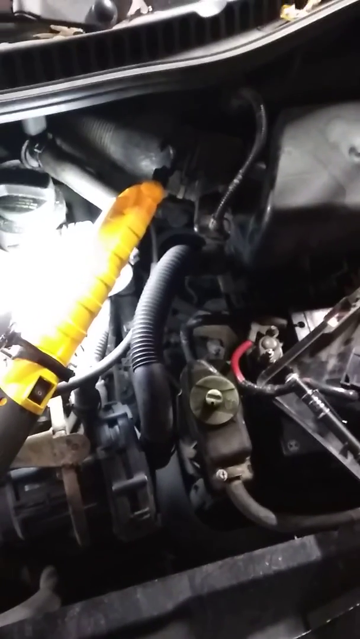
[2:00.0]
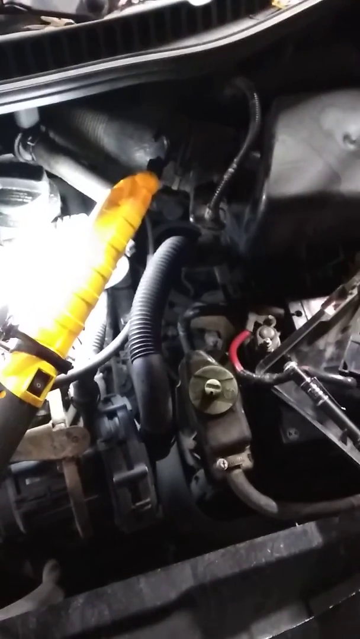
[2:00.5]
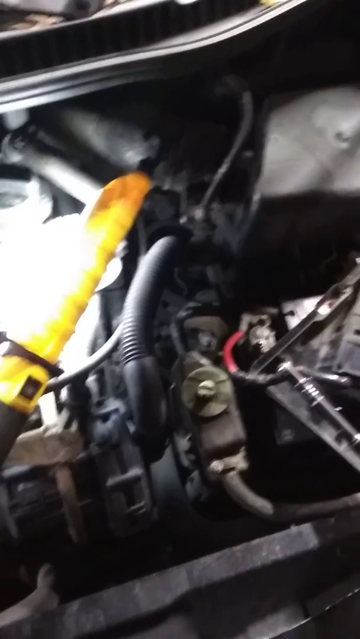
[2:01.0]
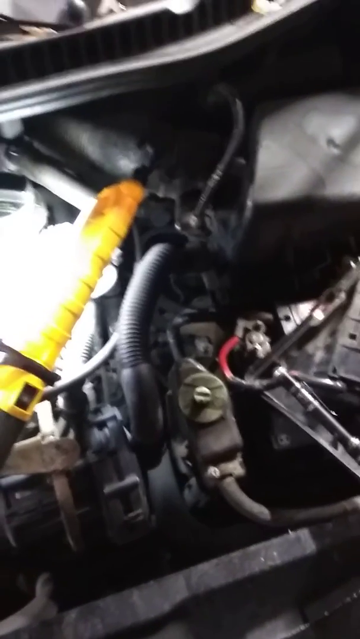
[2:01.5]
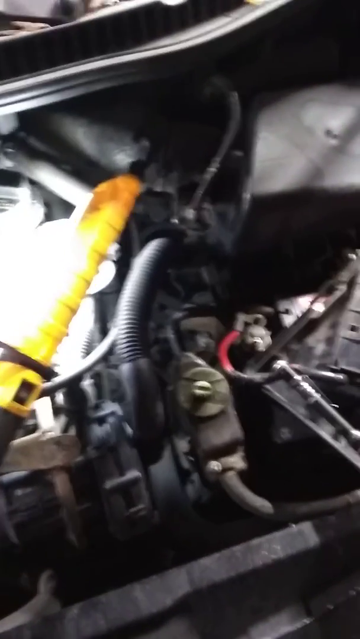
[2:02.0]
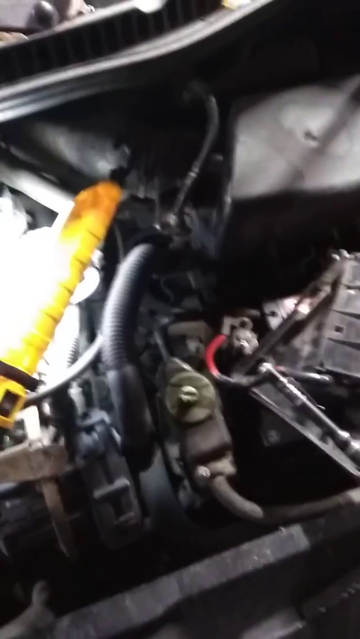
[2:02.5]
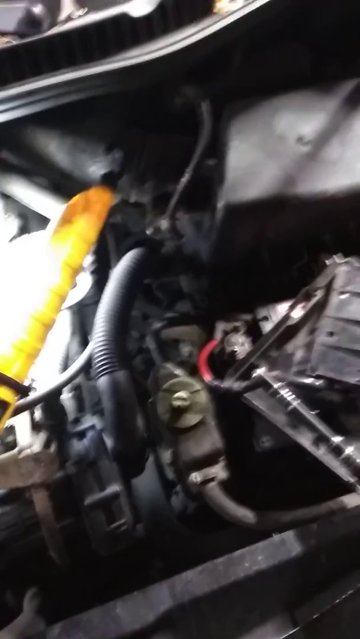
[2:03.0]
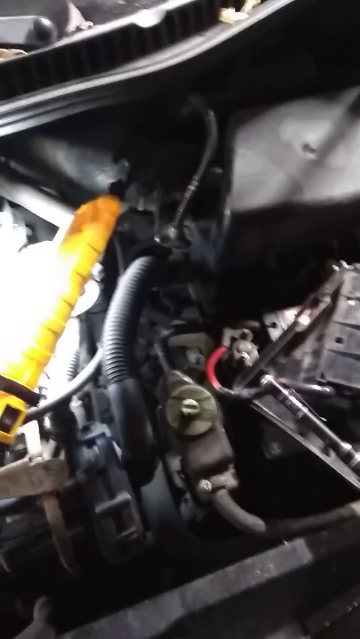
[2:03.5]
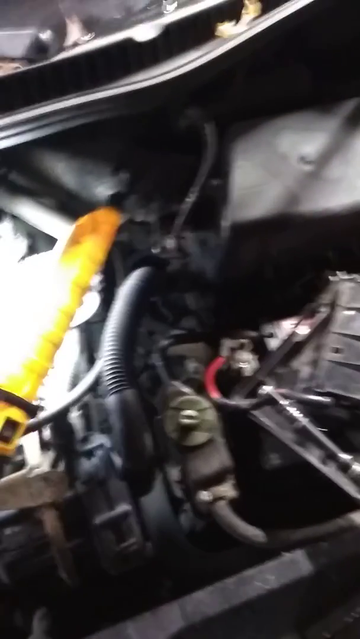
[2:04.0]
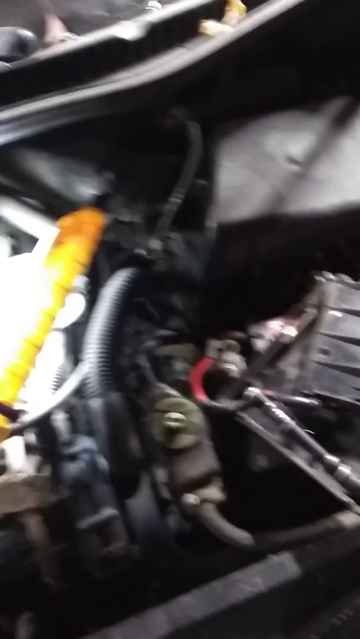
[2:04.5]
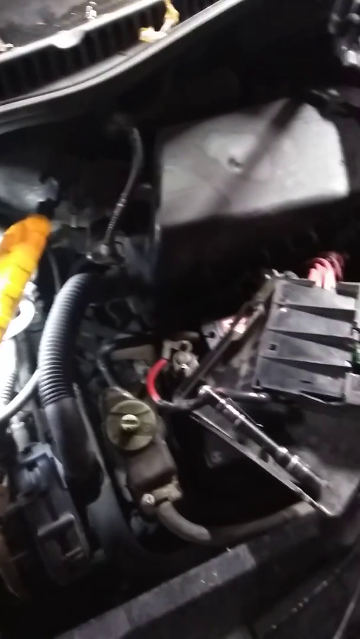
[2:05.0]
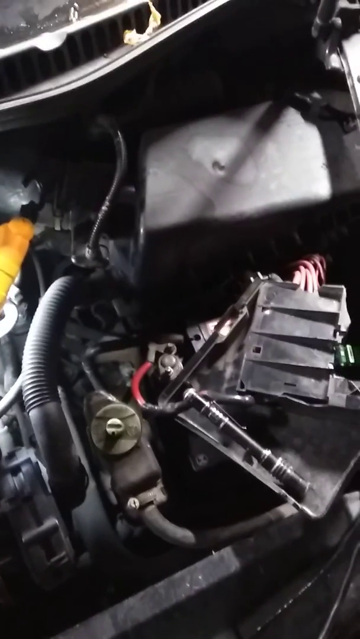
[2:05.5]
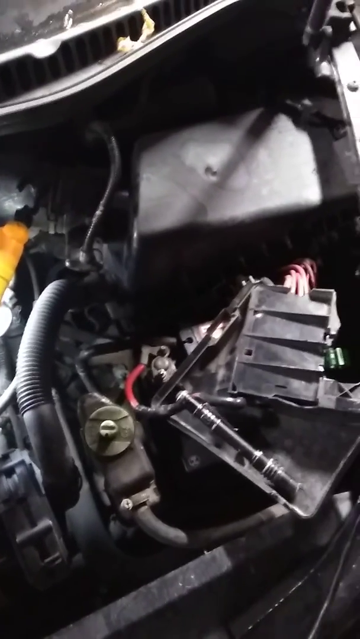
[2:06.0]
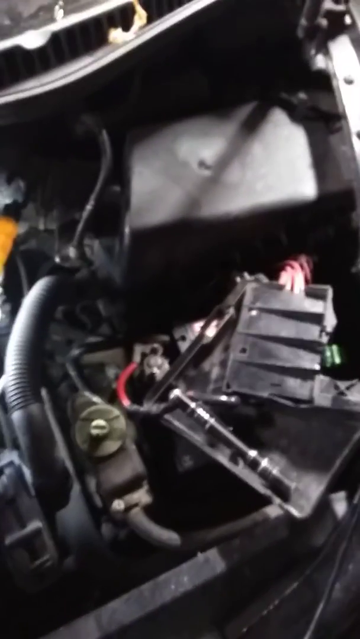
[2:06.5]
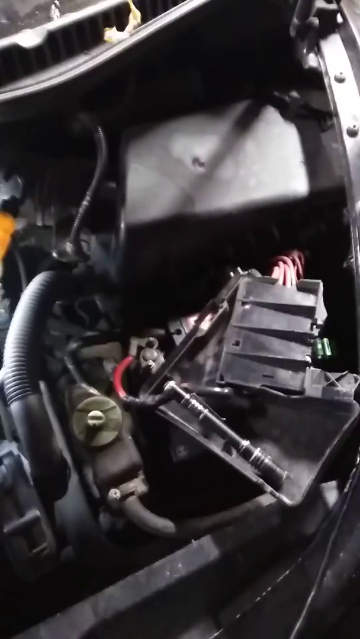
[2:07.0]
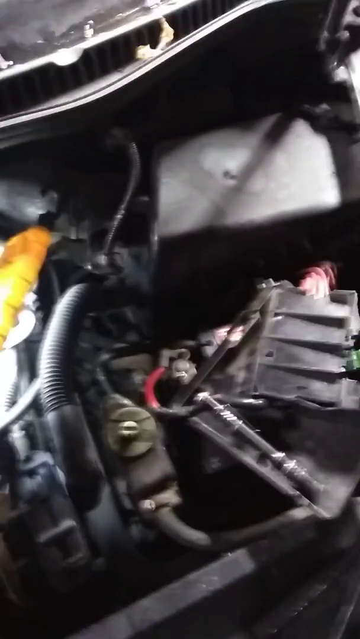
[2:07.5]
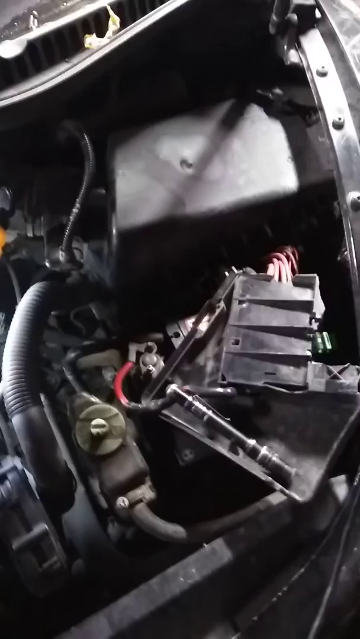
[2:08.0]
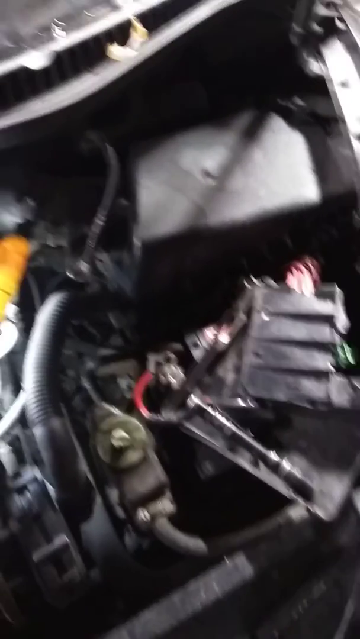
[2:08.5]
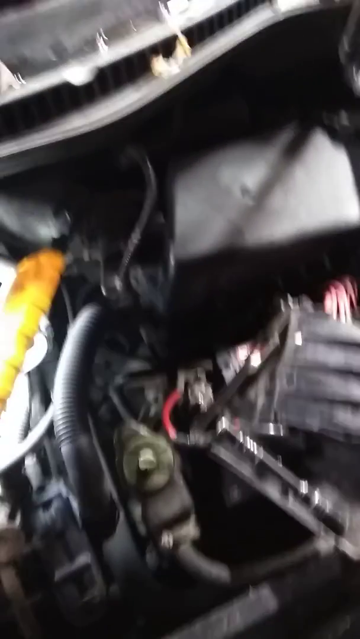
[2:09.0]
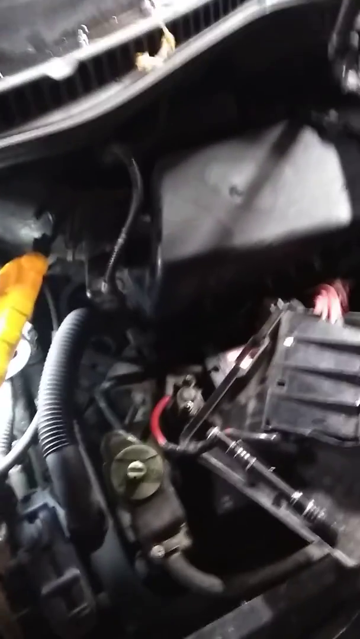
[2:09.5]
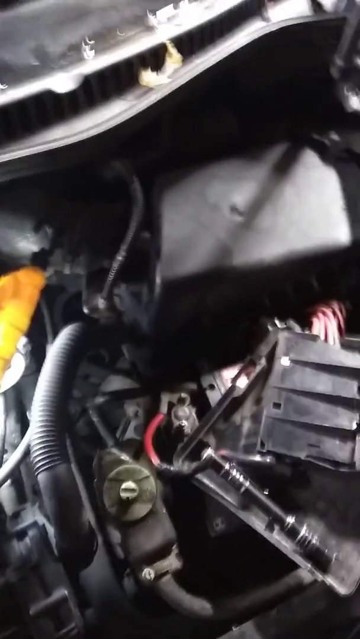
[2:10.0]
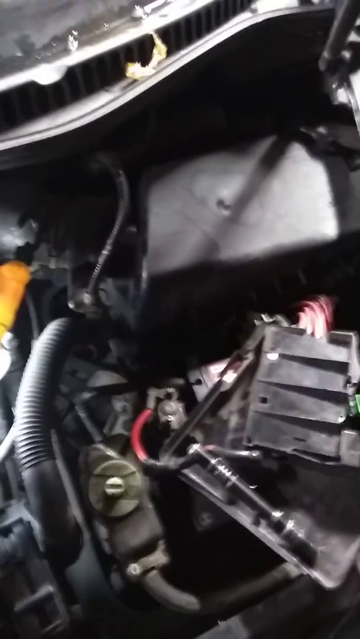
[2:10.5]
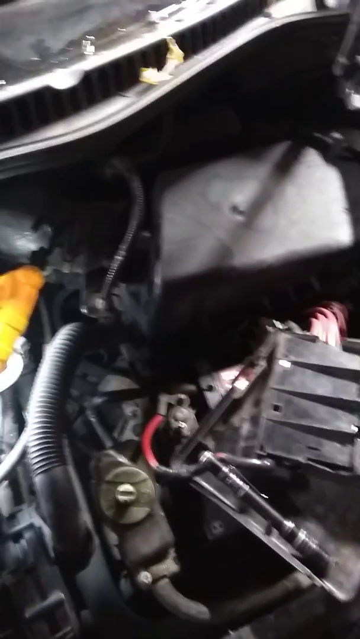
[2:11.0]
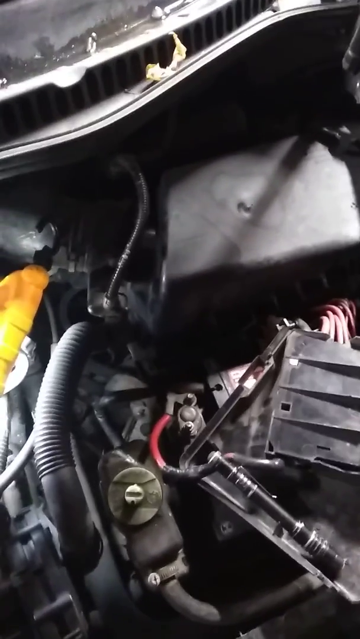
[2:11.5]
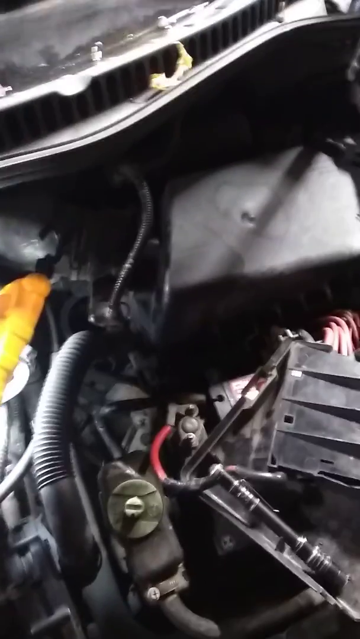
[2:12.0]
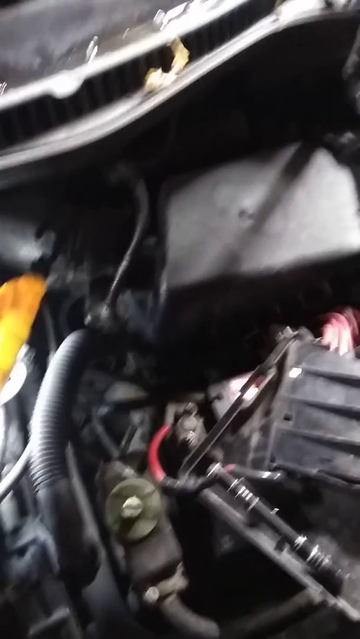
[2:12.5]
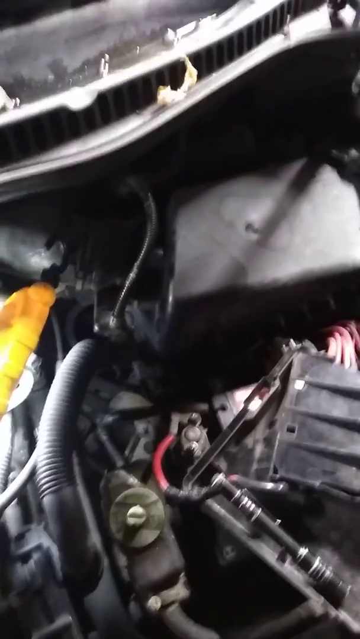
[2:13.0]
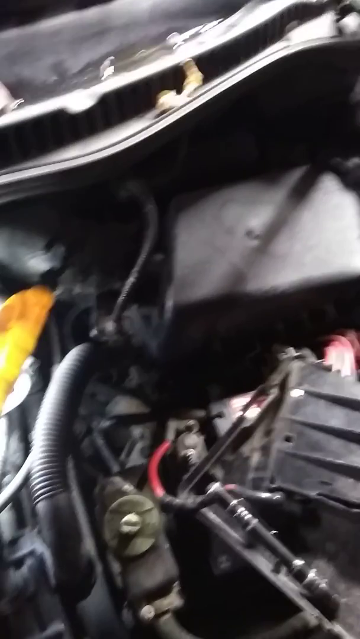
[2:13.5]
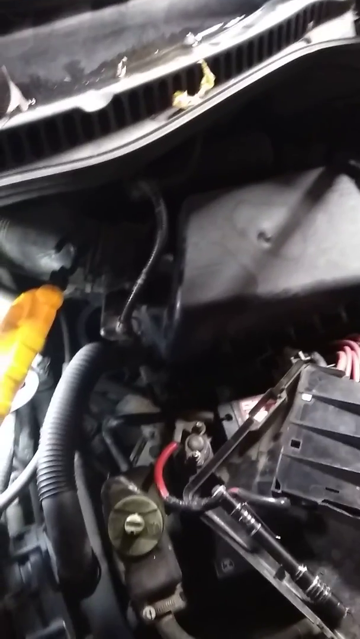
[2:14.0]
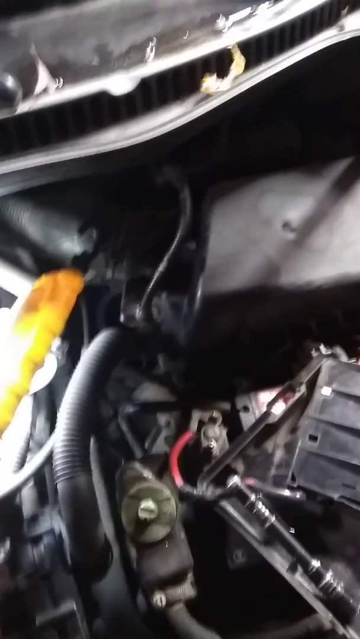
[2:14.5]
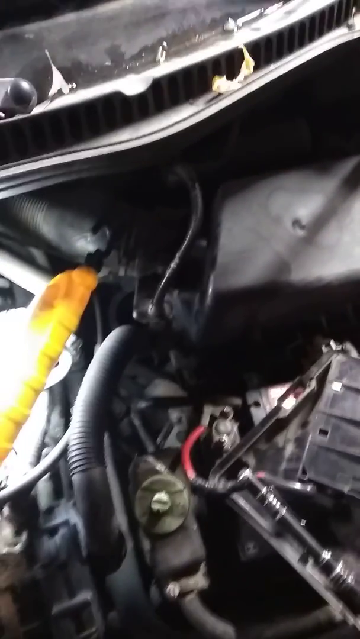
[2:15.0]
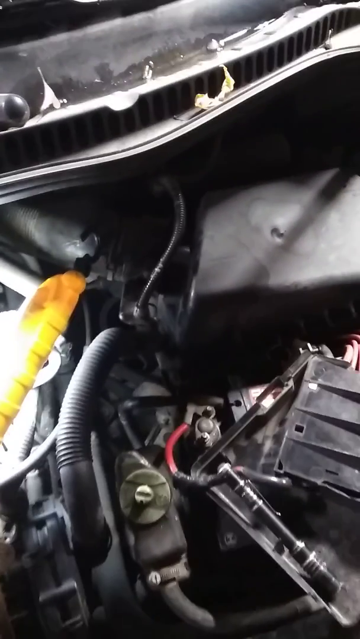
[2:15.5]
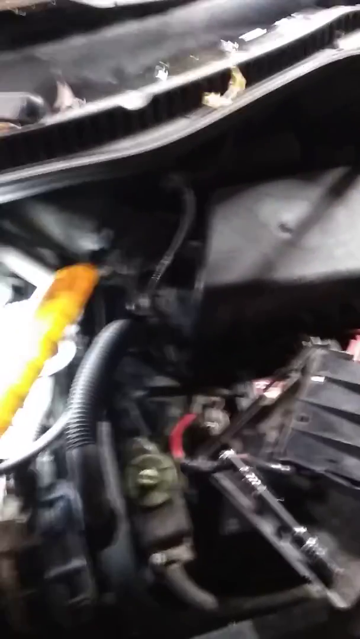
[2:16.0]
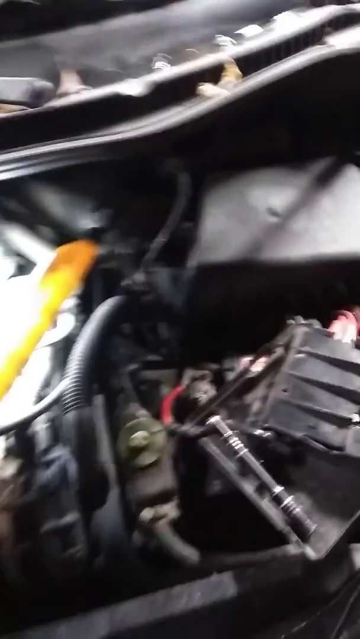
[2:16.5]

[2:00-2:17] The person is still focusing on the centre of the engine, and also toward the right-hand side. Toward the top left of the screen there is a grey box, and it appears that something is missing on top of it. Underneath, at the bottom right, there are some loose parts. Toward the top of the screen there appears to be a sort of grill, almost like where heat would dissipate out of the engine when the bonnet is closed. The colours are mostly black and grey, apart from the yellow tool and a small red item toward the right-hand side of the engine, which appears to be sort of bonding together two different areas. The image is very low quality and very dark.